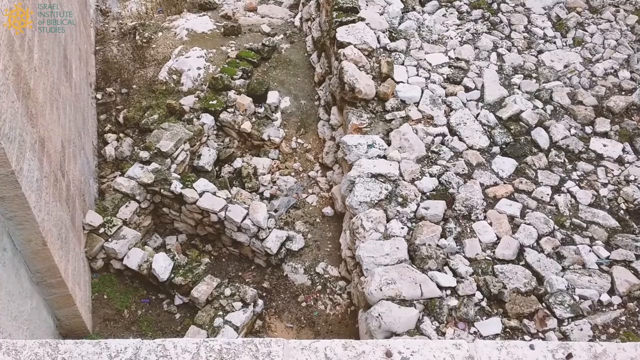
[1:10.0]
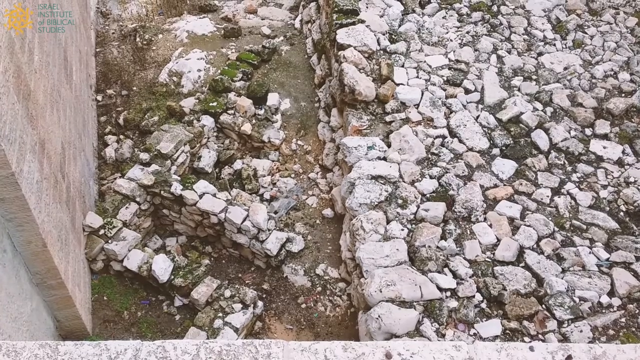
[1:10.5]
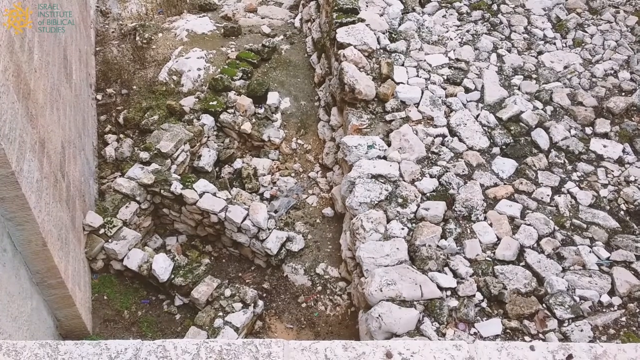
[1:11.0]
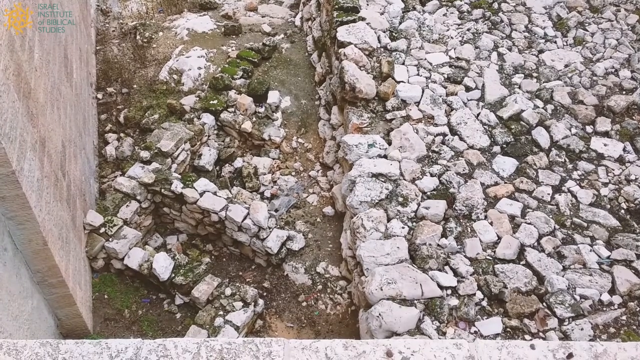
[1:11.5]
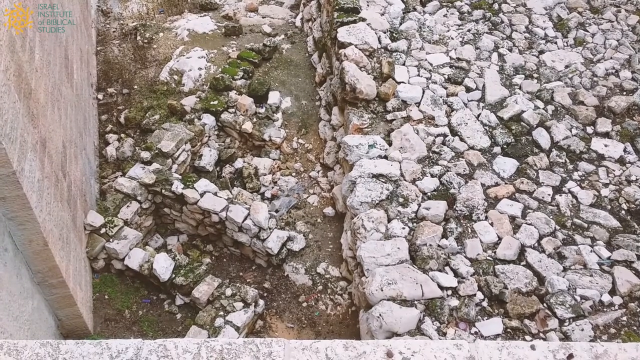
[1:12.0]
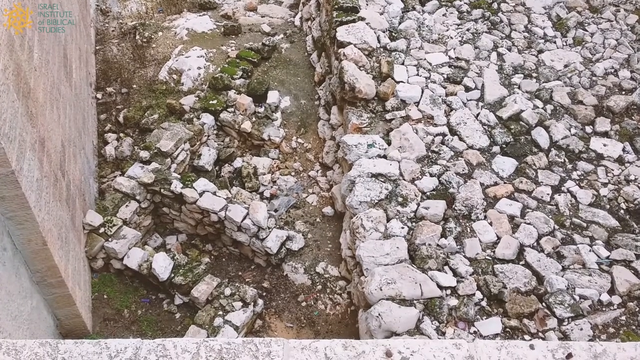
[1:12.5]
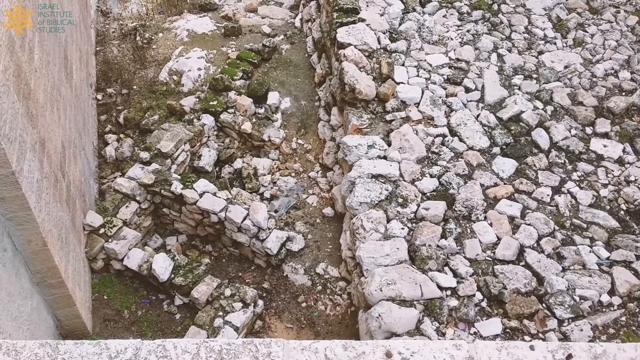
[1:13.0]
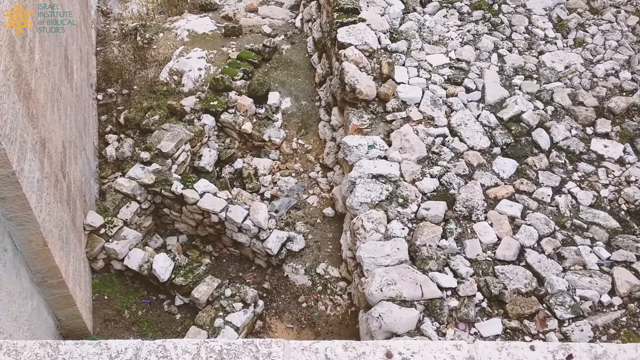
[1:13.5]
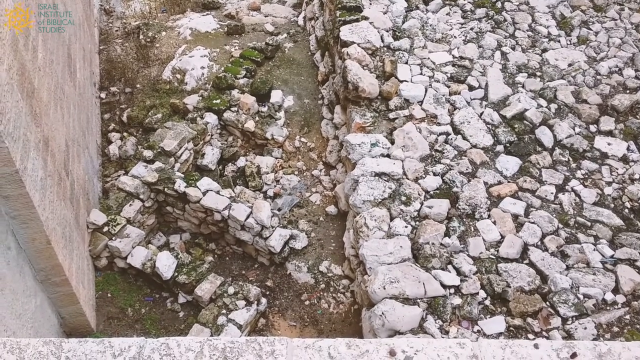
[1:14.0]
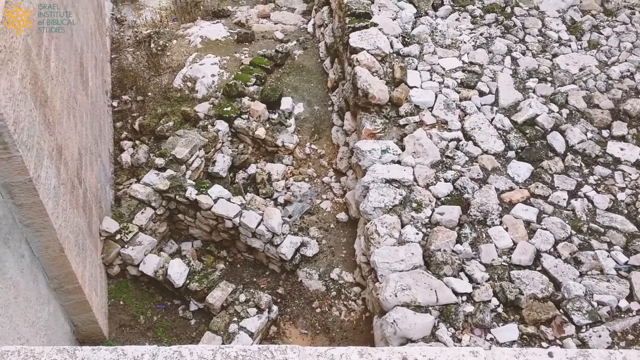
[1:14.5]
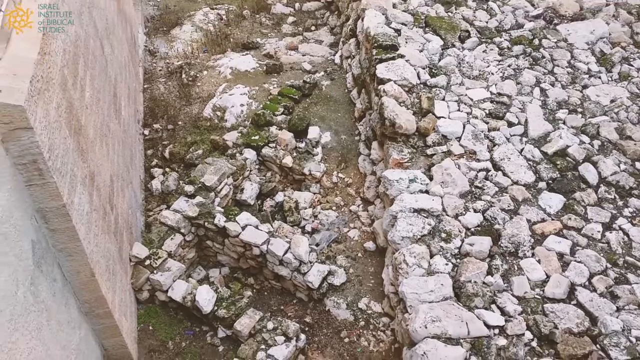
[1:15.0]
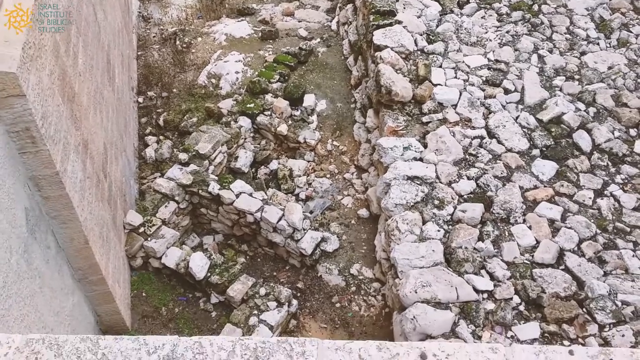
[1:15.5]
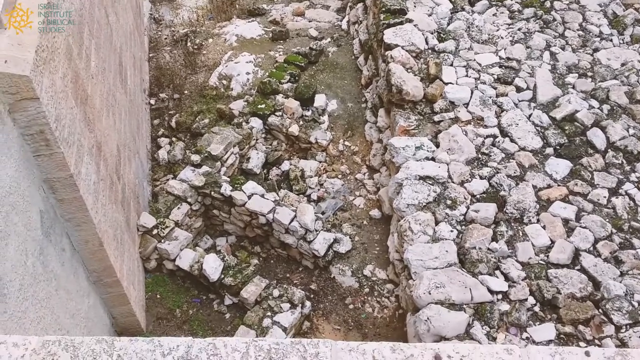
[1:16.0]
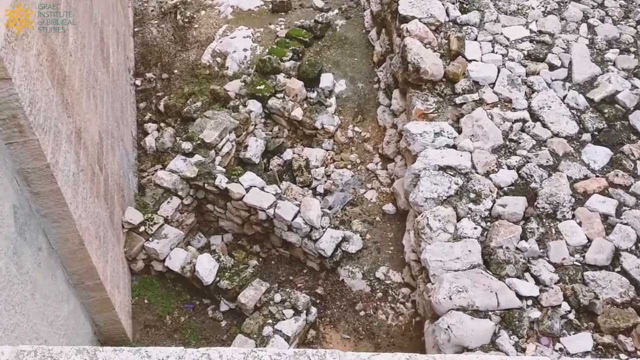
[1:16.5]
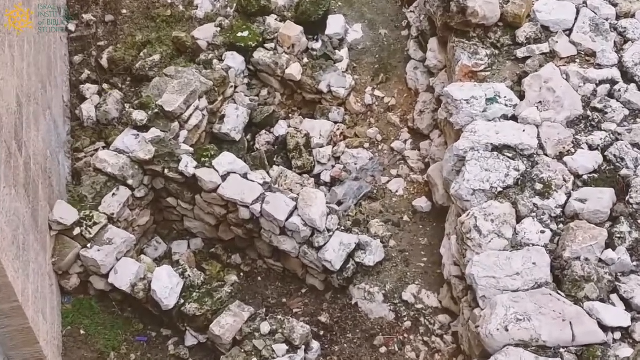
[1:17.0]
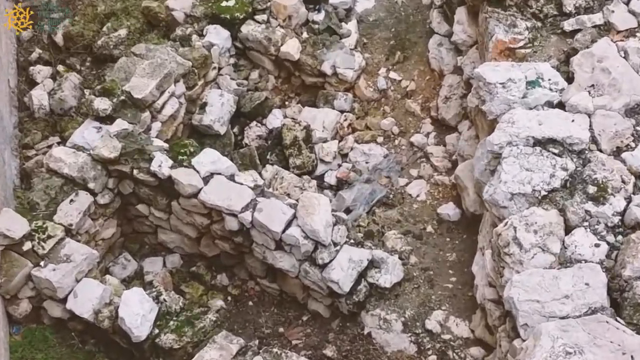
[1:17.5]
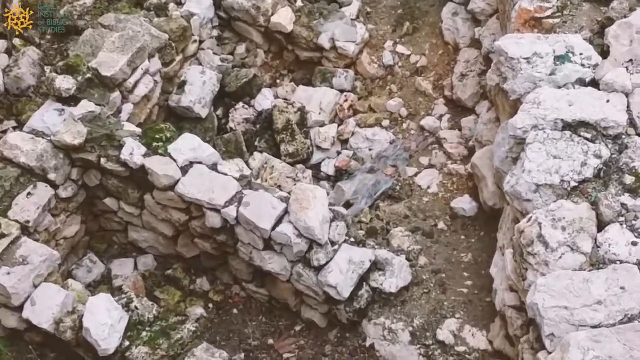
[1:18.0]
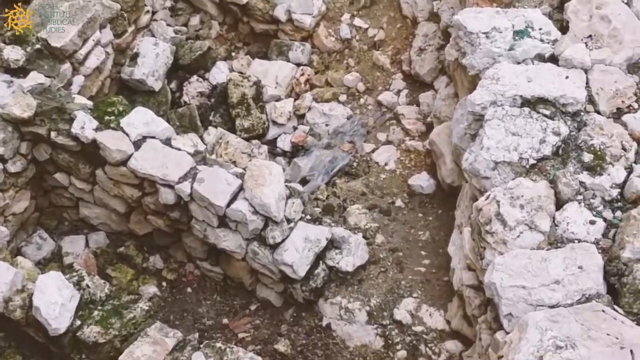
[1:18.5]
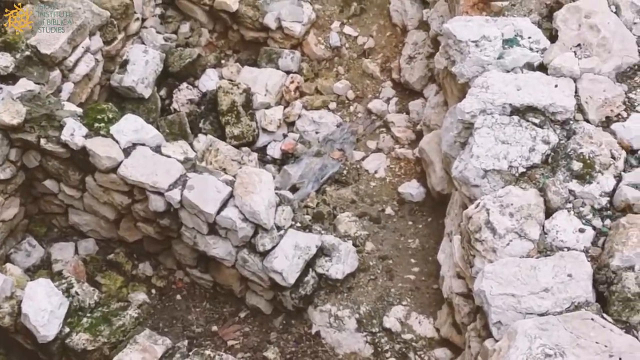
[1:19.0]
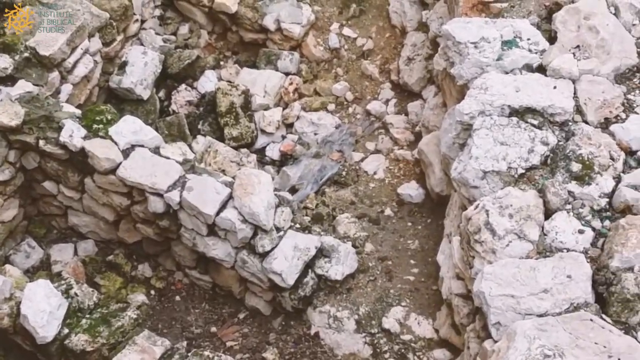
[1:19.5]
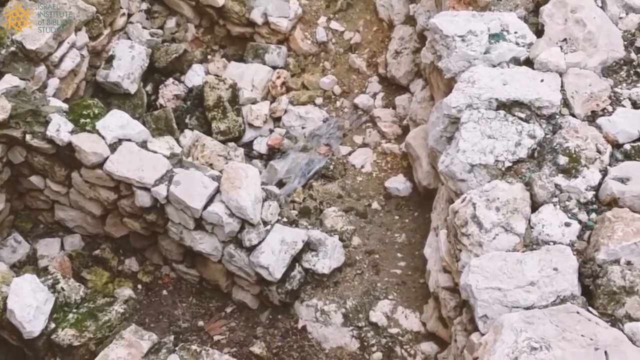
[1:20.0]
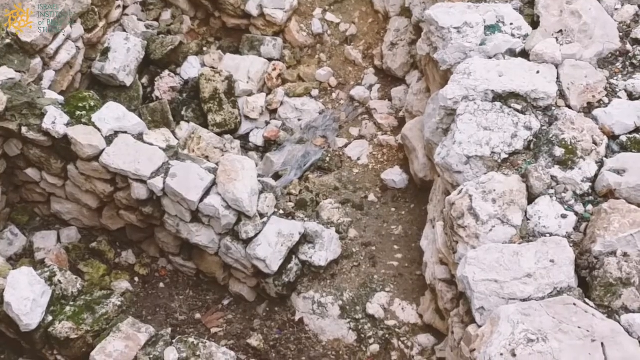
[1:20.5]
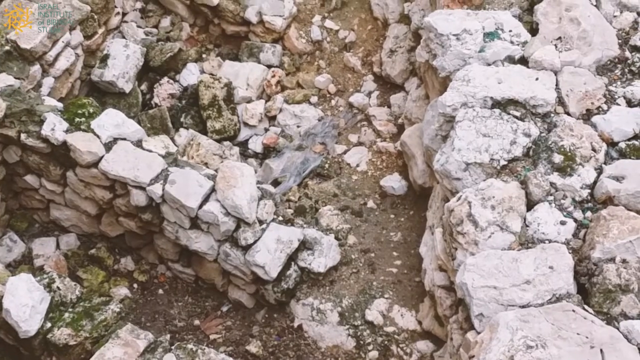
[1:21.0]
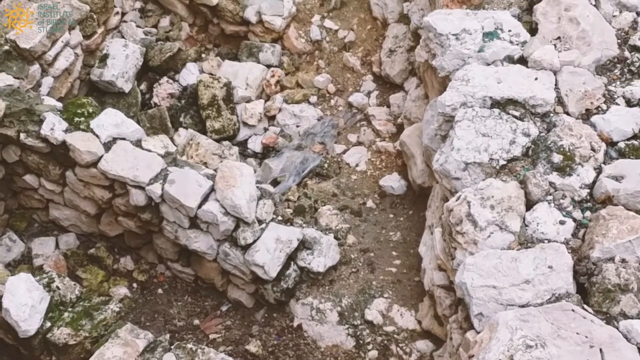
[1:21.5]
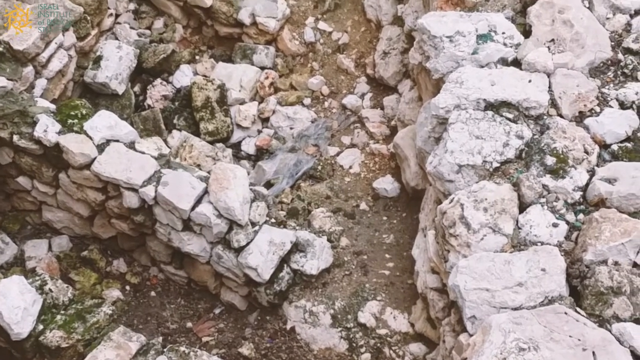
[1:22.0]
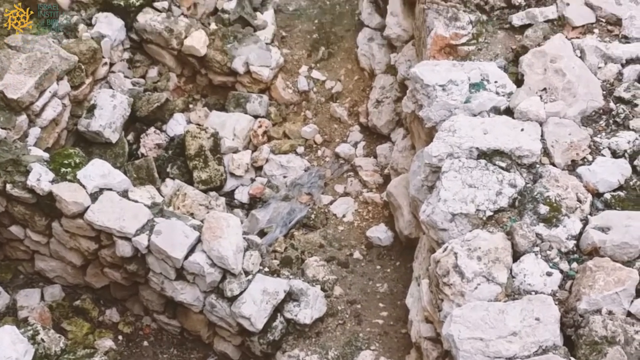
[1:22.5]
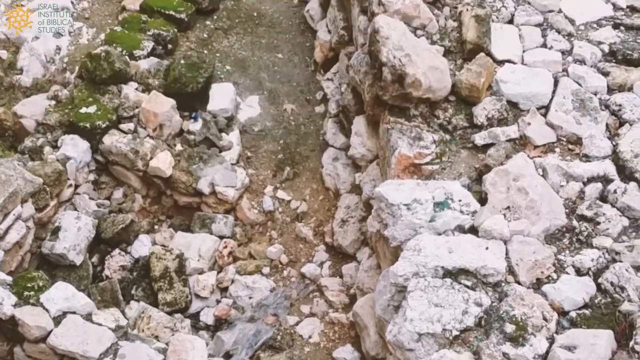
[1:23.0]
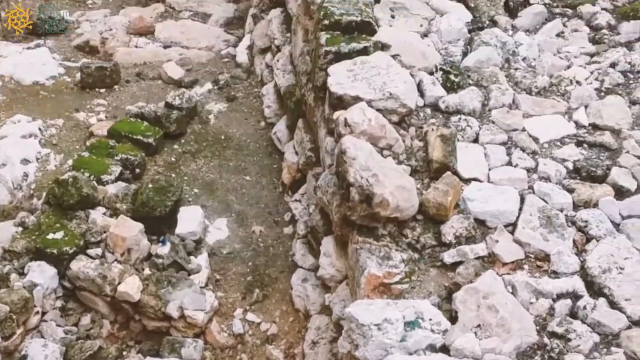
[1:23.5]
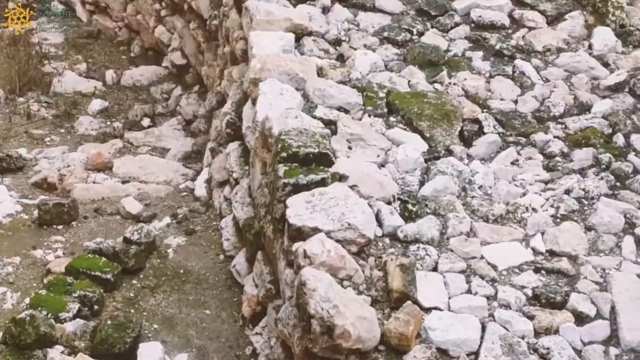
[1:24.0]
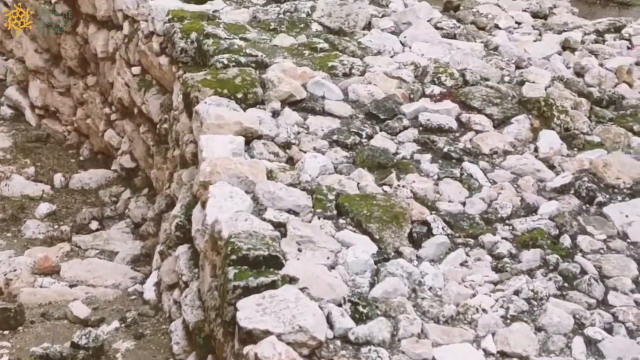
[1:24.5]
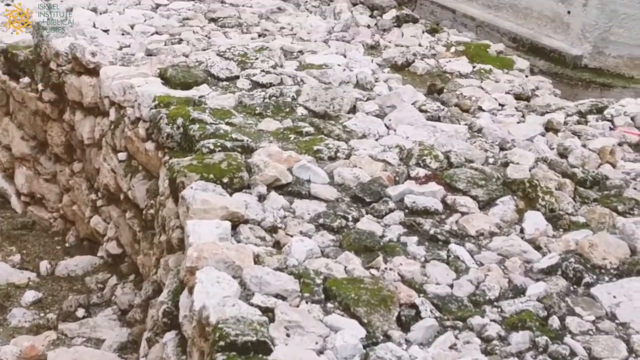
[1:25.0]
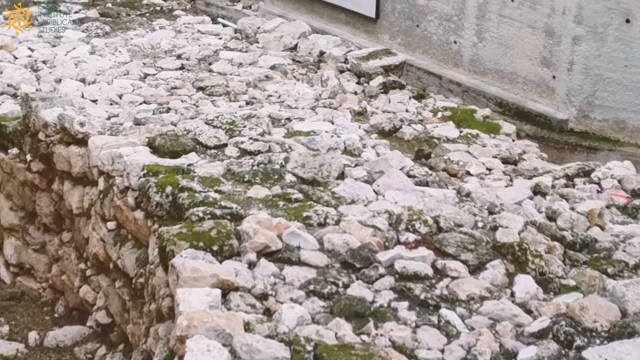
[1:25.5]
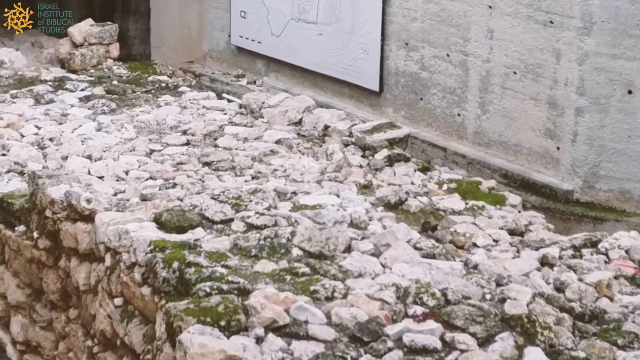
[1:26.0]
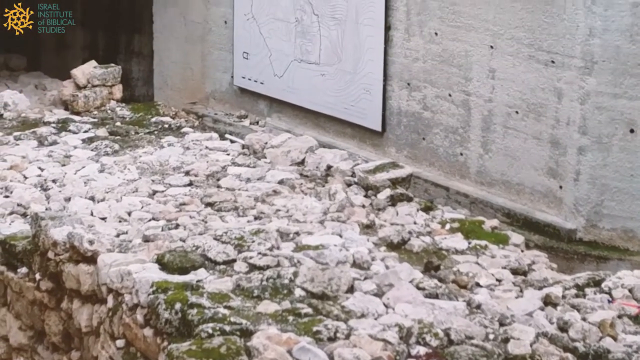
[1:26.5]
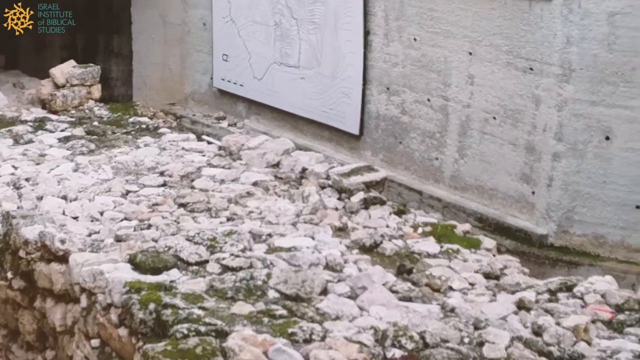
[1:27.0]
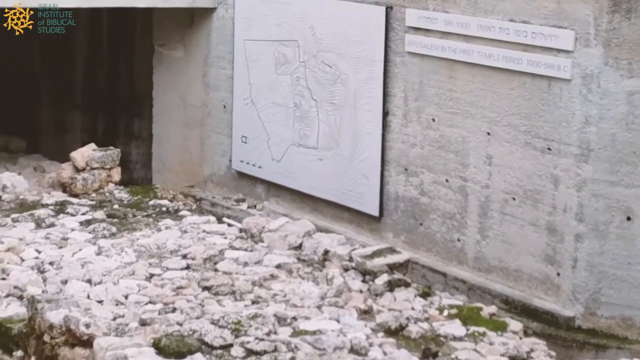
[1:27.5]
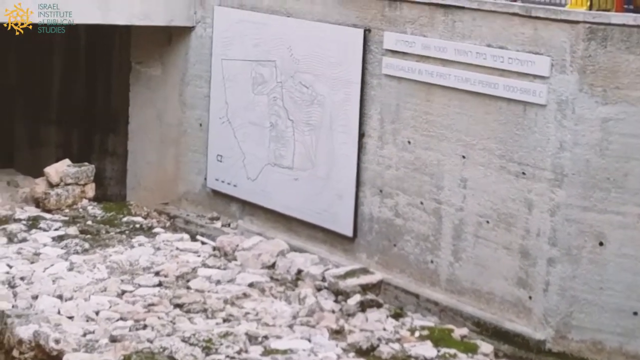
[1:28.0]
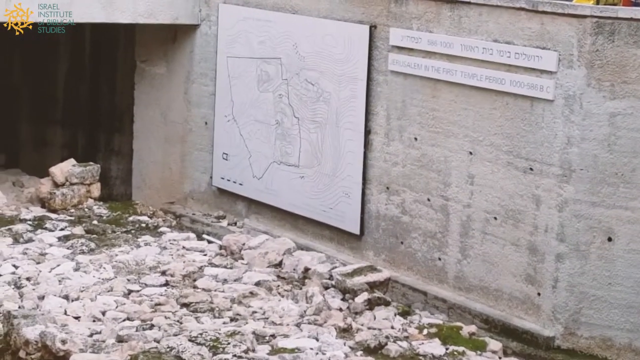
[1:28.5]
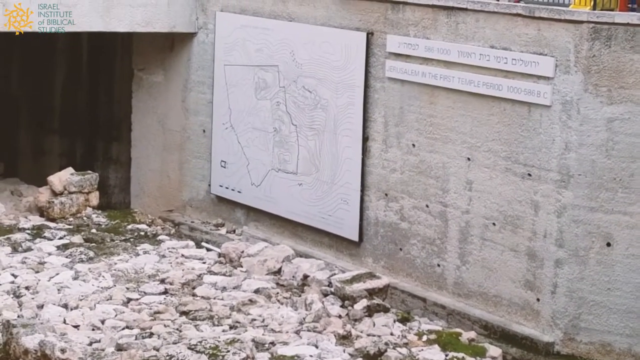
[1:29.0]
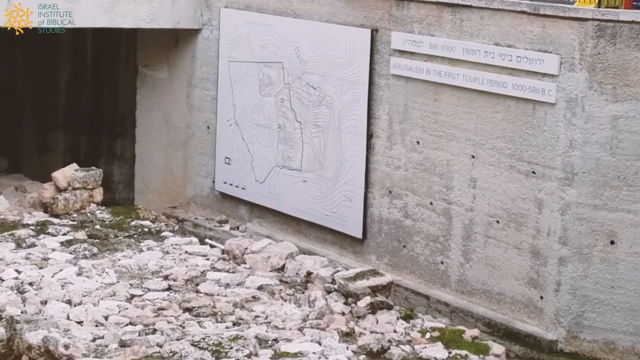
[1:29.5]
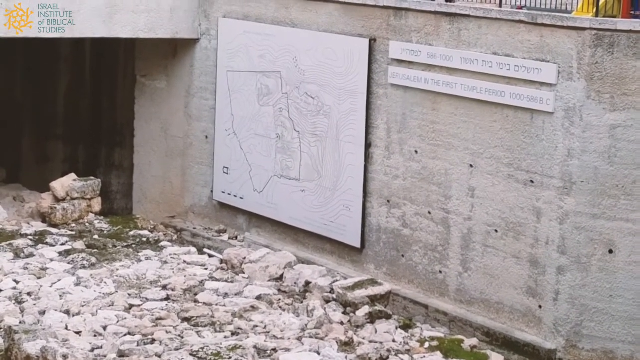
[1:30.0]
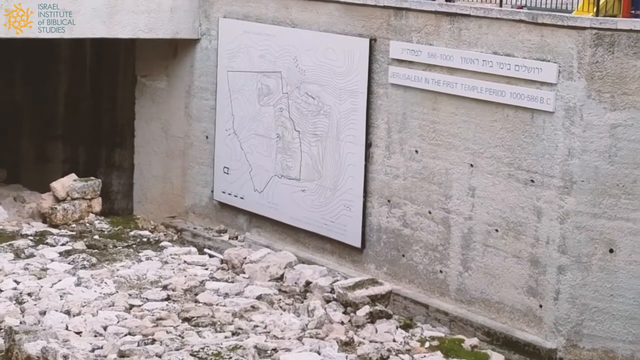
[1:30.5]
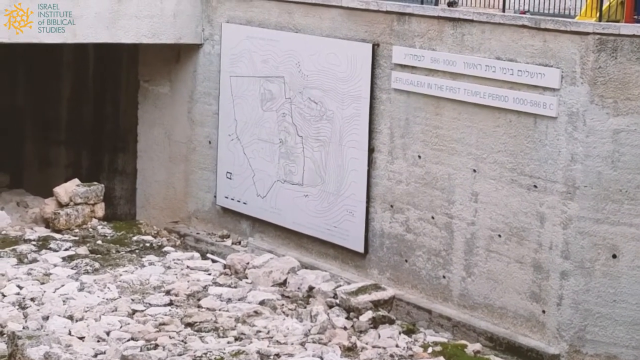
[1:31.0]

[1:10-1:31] The area, kind of in the middle of the city, is possibly outside an apartment building, maybe an office building. It is a mess of stones under the overpass and at the bottom of the stairway, and it looks like people might also throw their garbage down there. The rock looks to be left over from maybe a construction project from many decades ago and has become embedded into the ground.